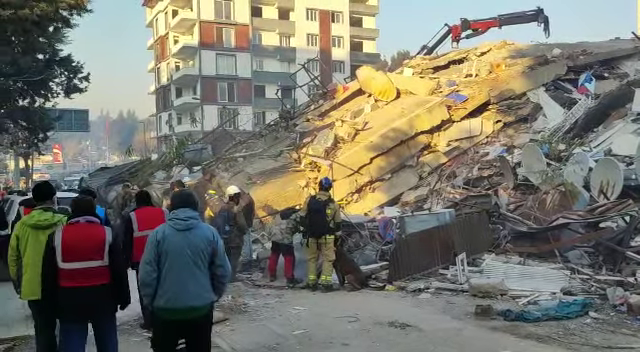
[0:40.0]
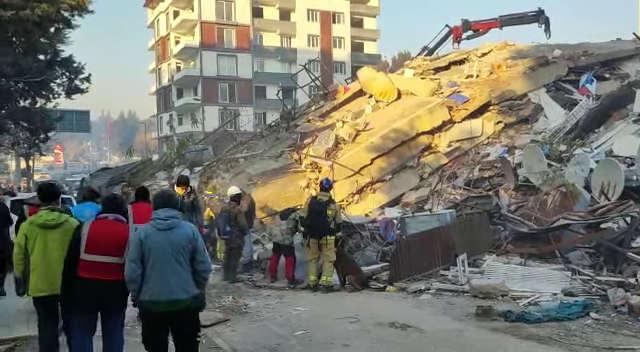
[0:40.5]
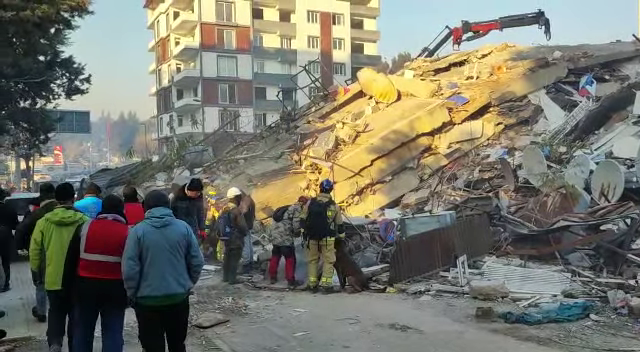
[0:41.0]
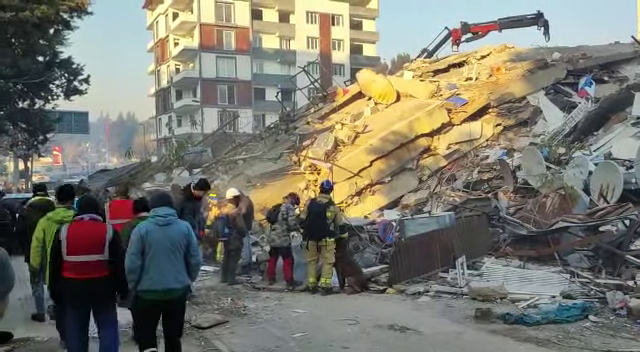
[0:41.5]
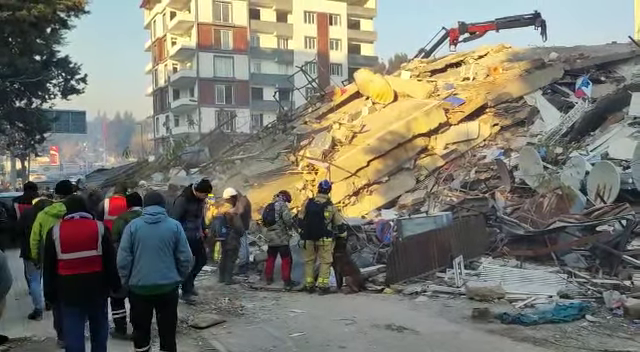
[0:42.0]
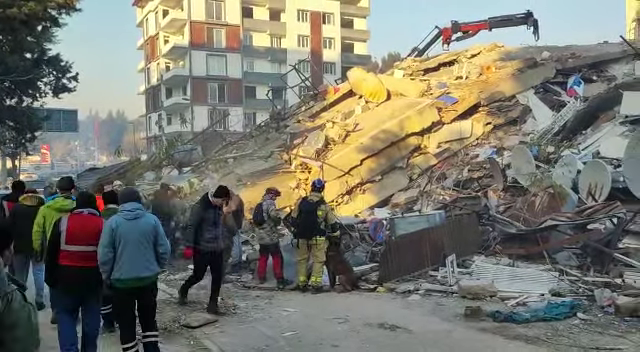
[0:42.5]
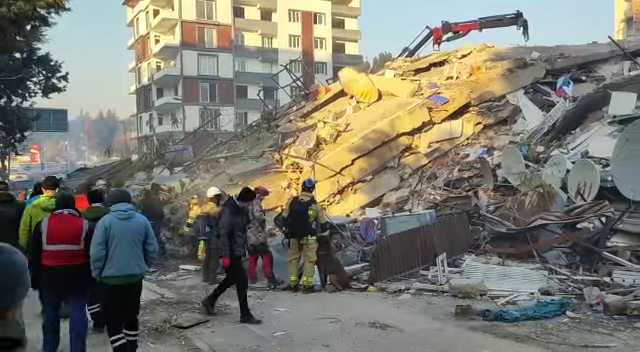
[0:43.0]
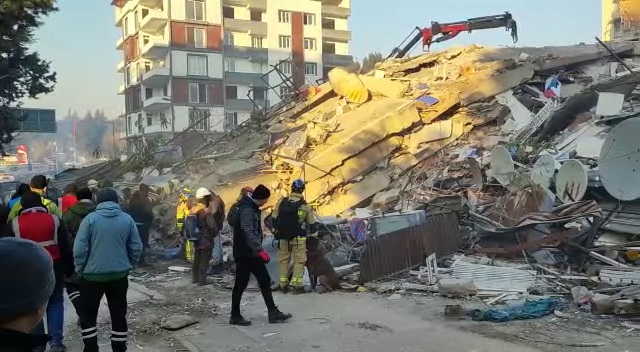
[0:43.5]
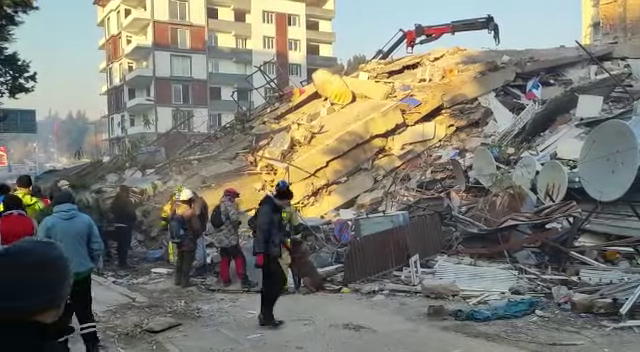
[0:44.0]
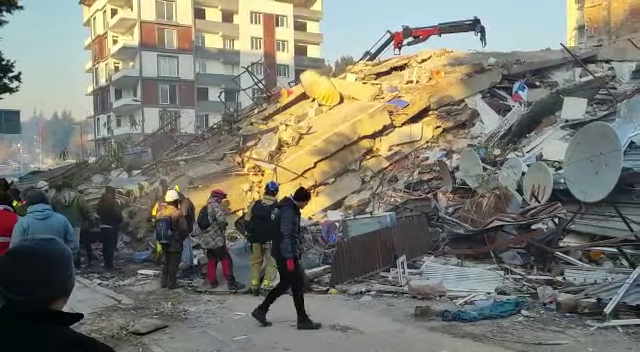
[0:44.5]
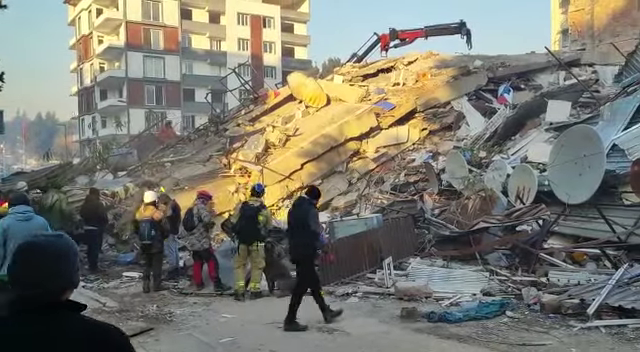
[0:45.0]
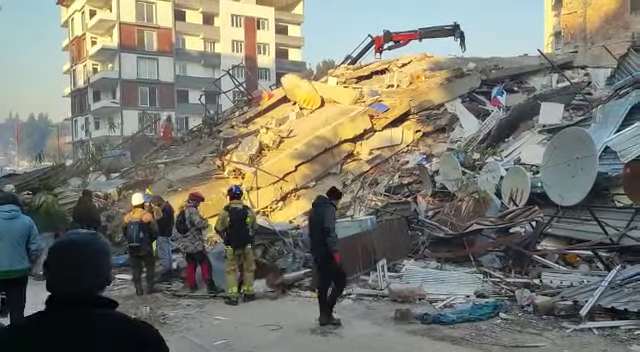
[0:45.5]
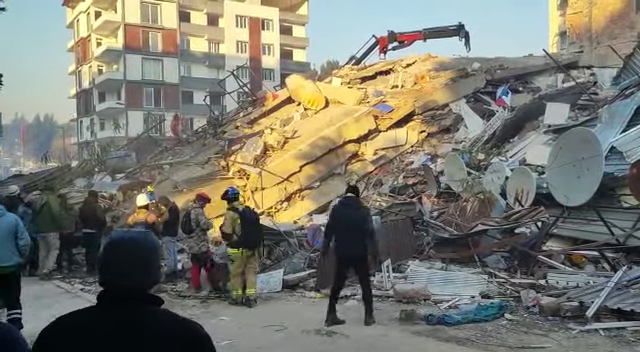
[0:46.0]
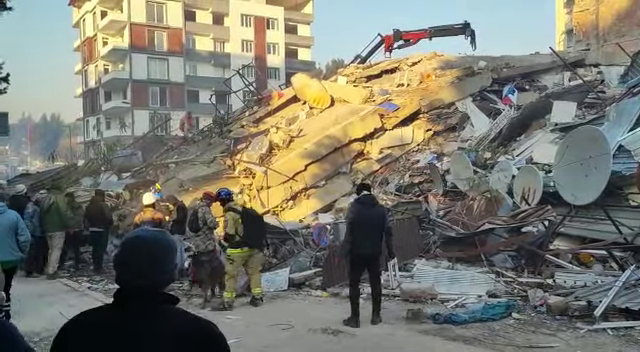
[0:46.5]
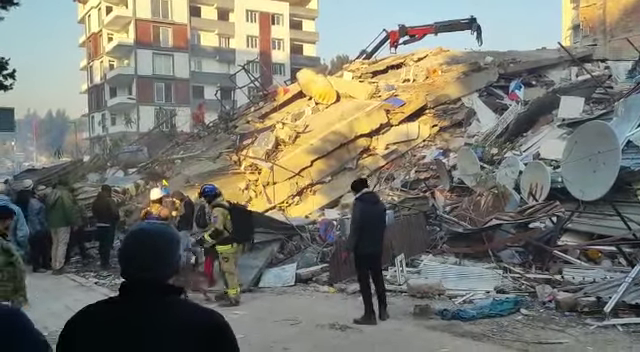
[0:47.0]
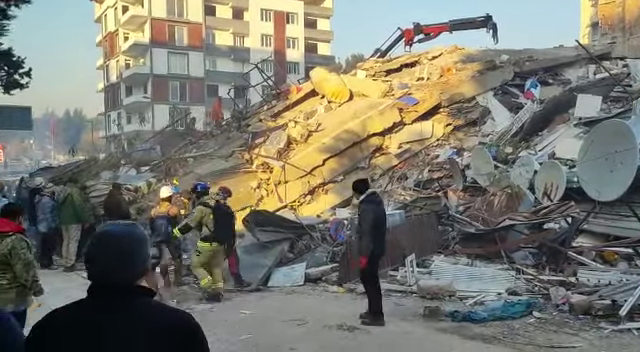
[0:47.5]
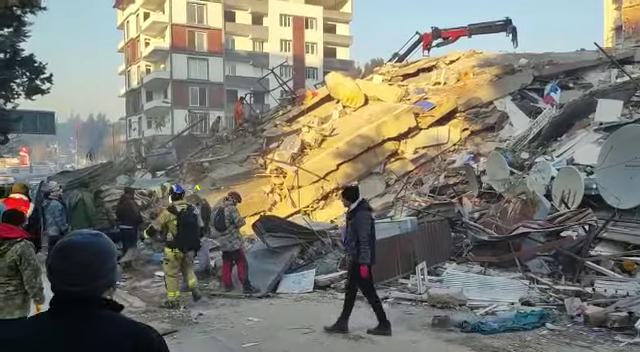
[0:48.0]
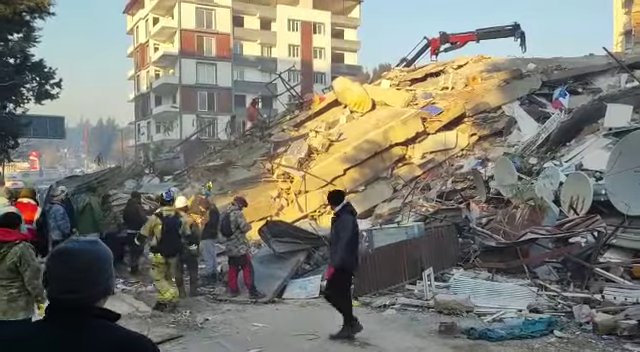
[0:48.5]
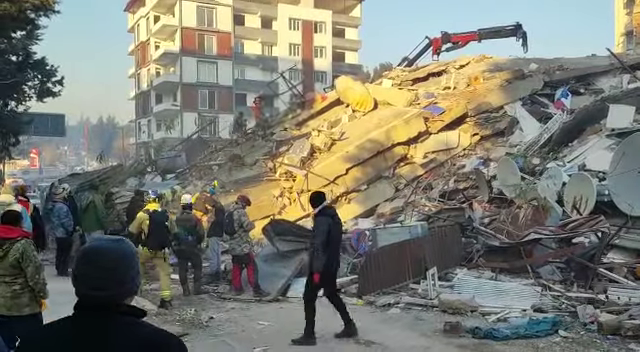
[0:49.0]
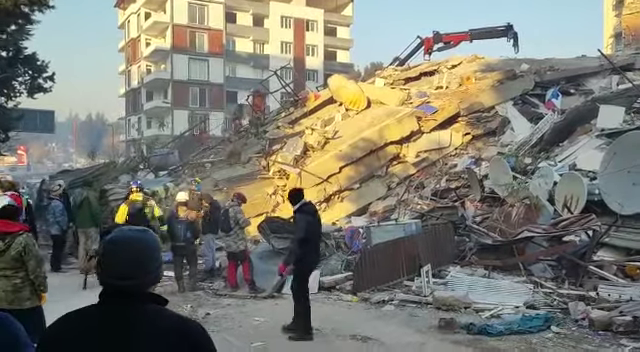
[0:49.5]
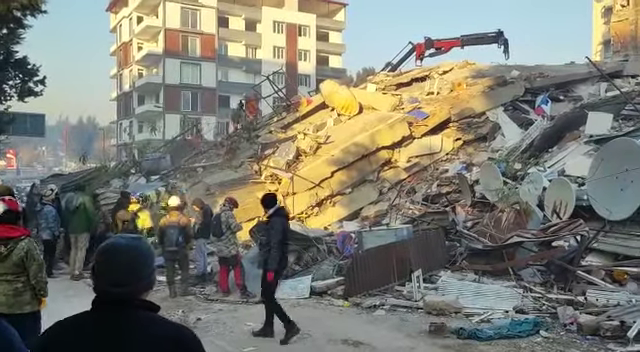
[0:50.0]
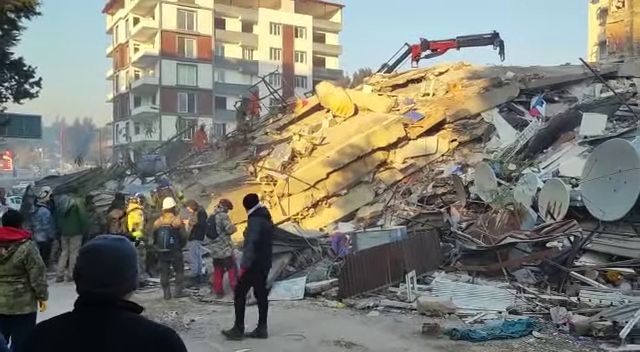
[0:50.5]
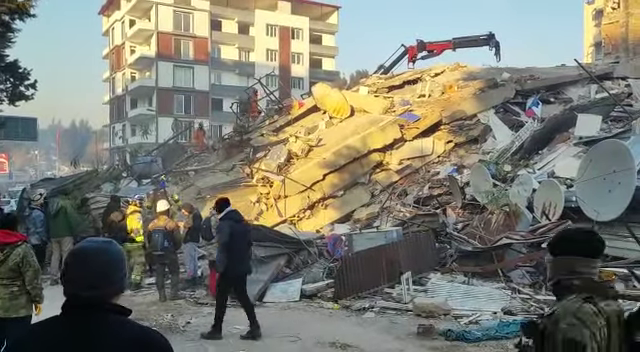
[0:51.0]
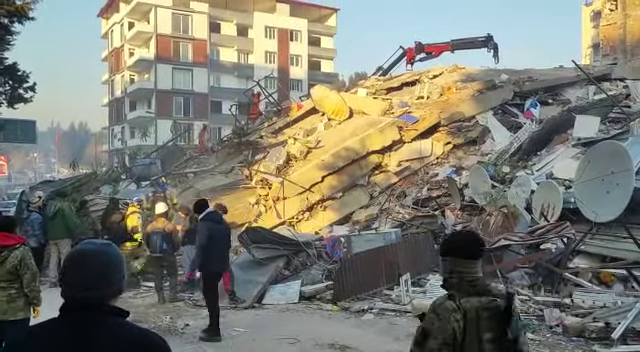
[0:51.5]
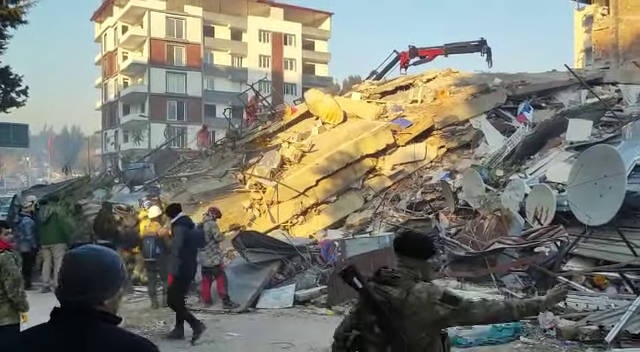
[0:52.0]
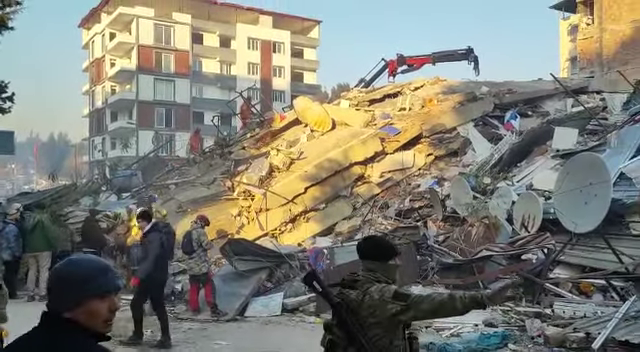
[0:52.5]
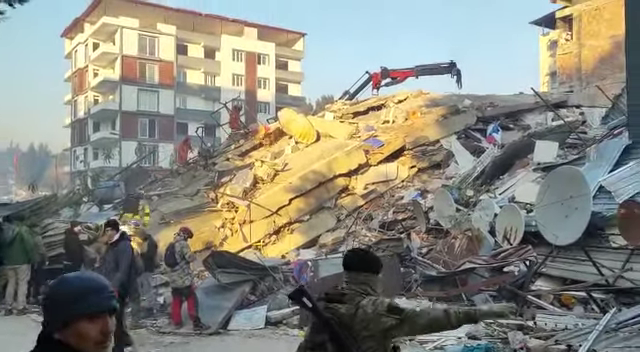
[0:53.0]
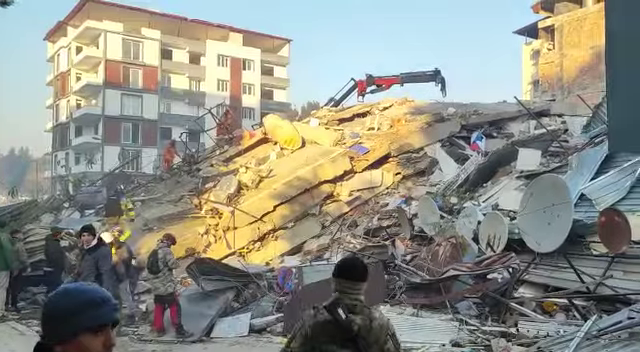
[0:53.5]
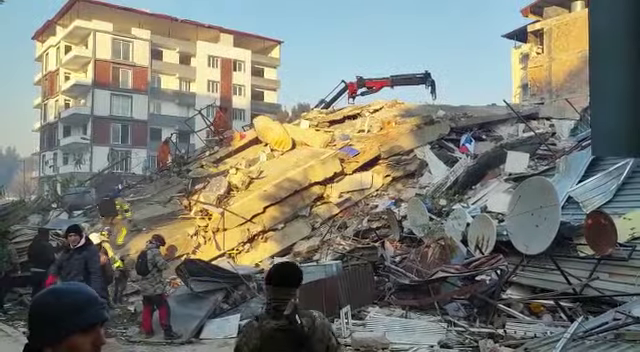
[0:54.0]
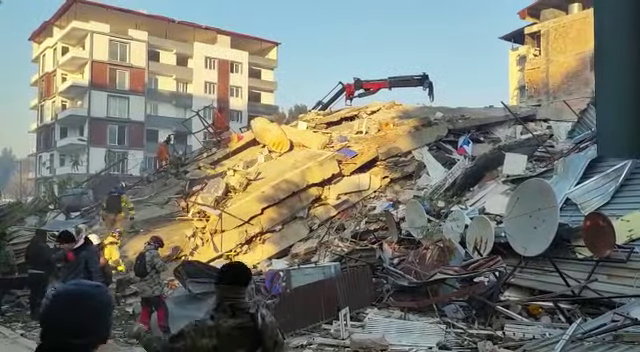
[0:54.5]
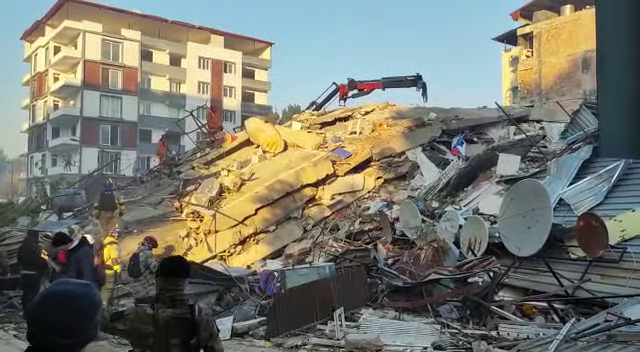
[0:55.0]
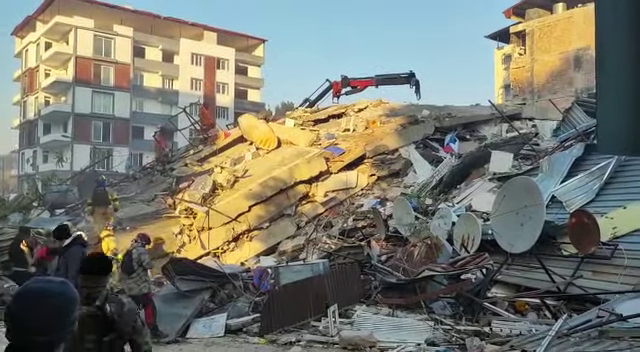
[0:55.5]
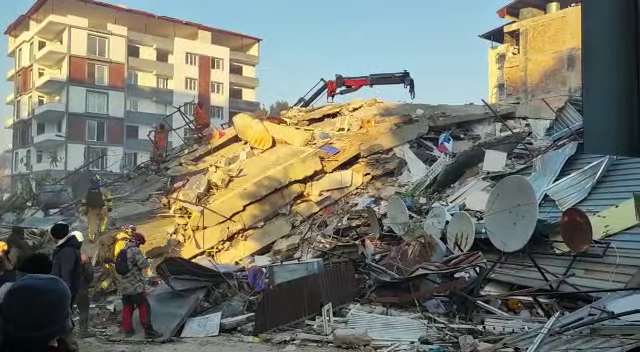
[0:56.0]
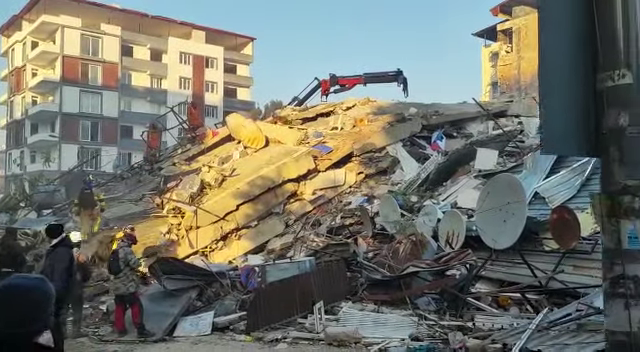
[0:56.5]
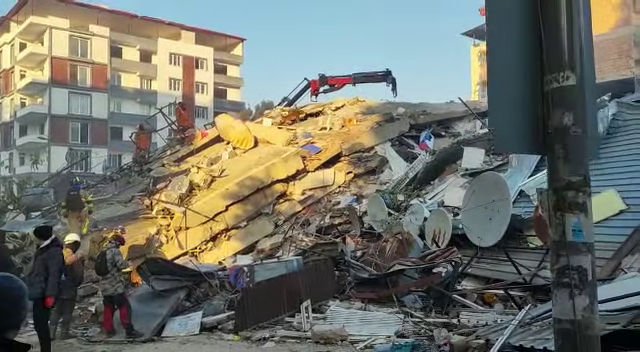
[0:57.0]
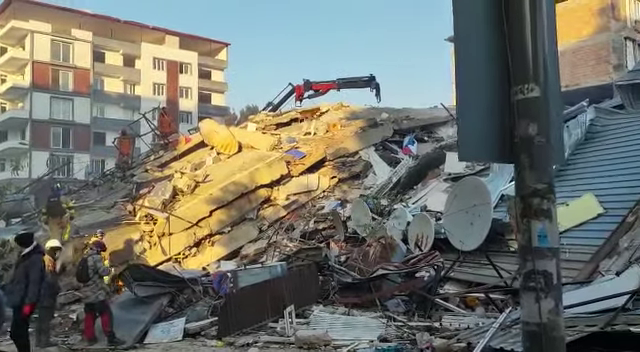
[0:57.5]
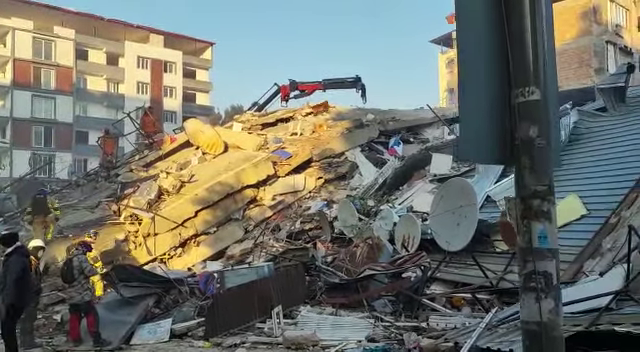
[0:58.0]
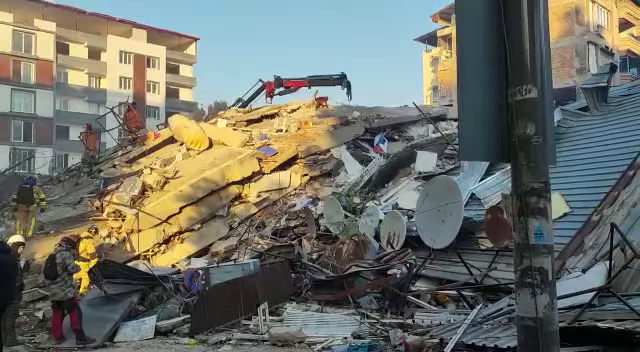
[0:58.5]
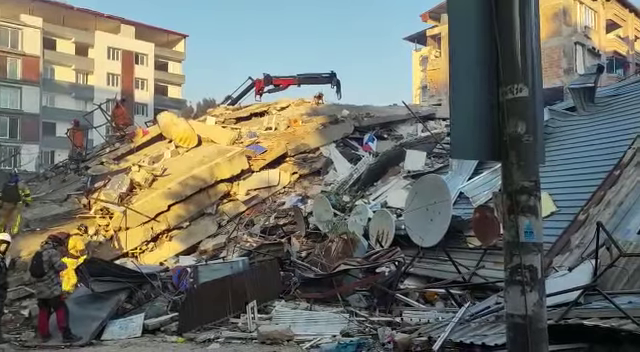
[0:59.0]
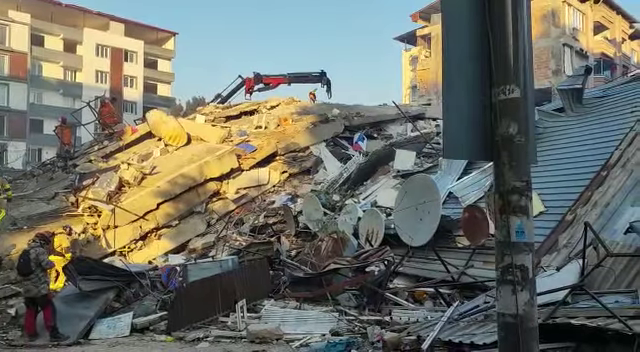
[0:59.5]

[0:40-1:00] The camera pans toward the left, where the sun shines down on the rubble of the collapsed building. Something flat appears to be a large rooftop. Other civilians and workers walk through on the far left. The dog is with the firefighter, who walks it on a leash. A soldier appears to be wearing a black beanie and has a gun strapped to their back; they wave their hands in caution toward an individual walking through. The firefighter with the dog appears to be at the bottom of the rubble, while a second firefighter begins to make their way up the rubble of the collapsed building. Meanwhile, several helpers and civilians are still walking through from the far left, where the cars are passing.